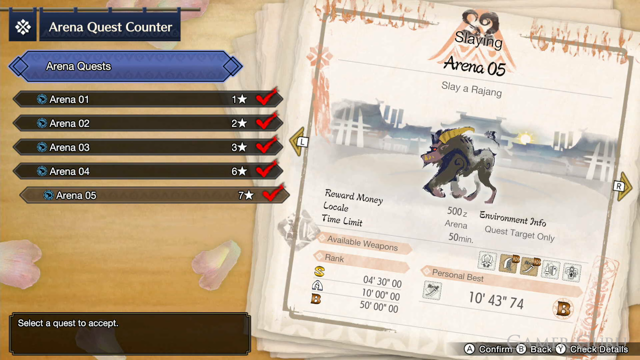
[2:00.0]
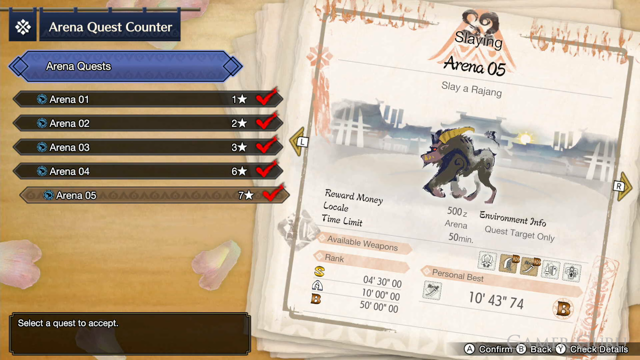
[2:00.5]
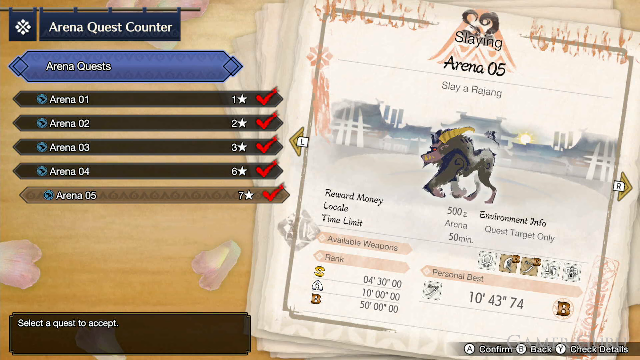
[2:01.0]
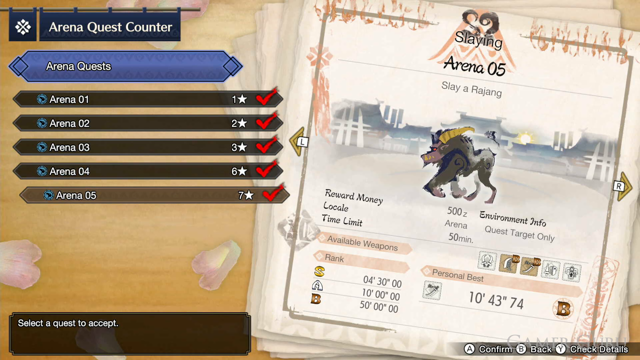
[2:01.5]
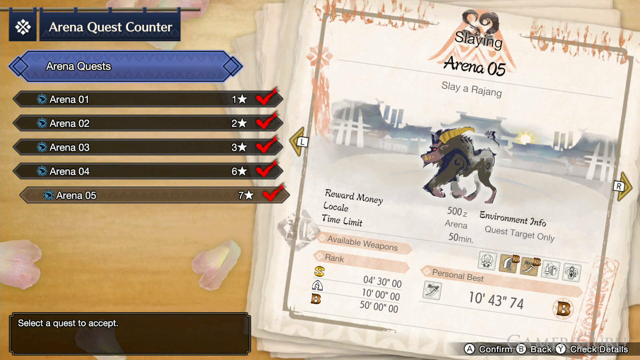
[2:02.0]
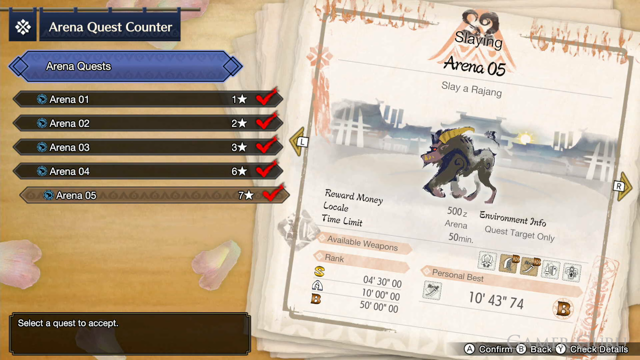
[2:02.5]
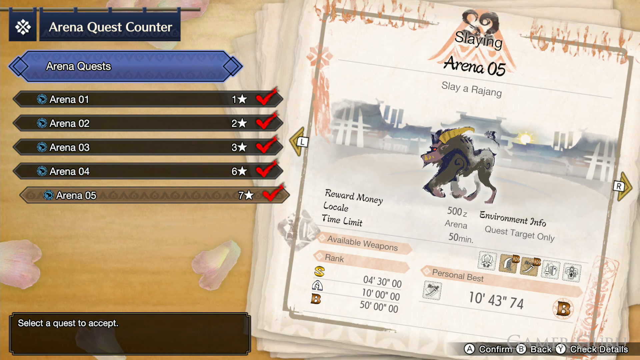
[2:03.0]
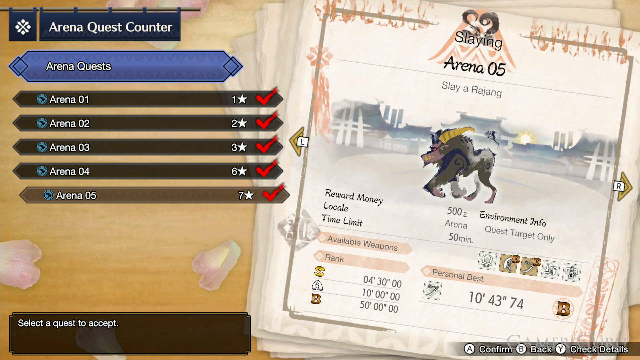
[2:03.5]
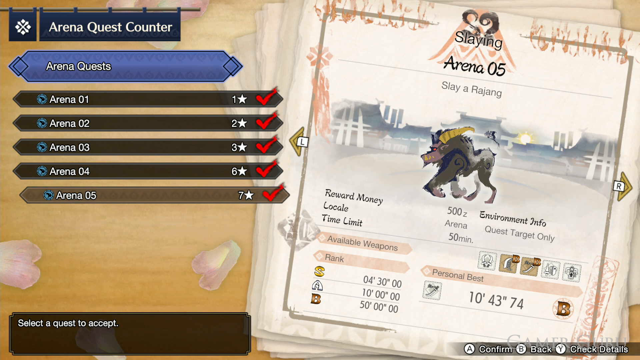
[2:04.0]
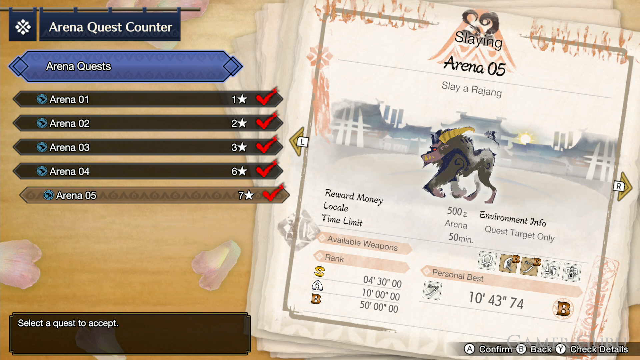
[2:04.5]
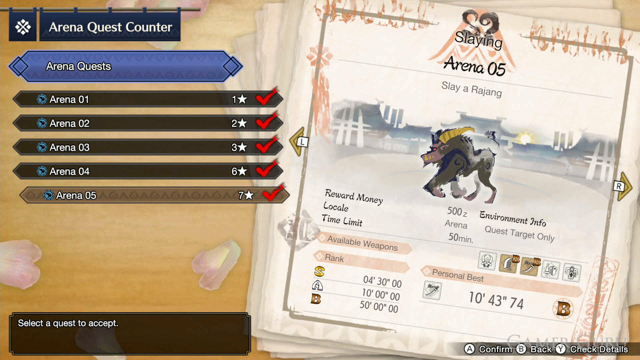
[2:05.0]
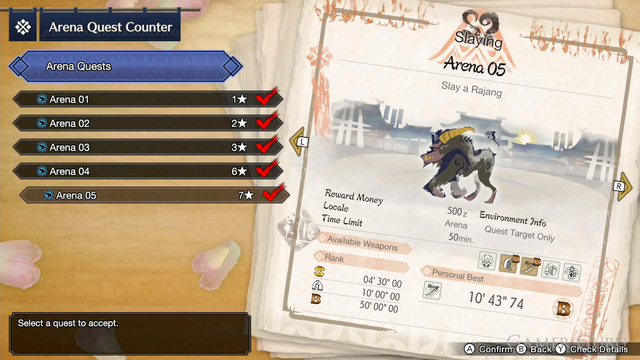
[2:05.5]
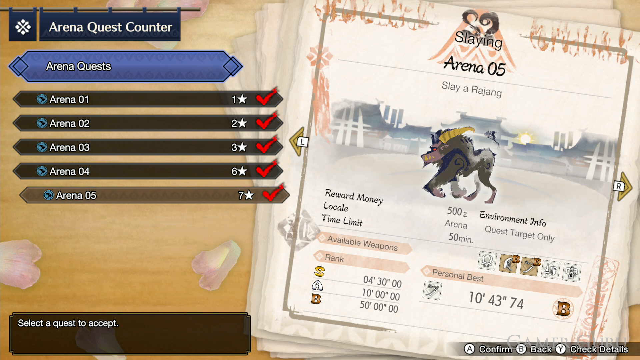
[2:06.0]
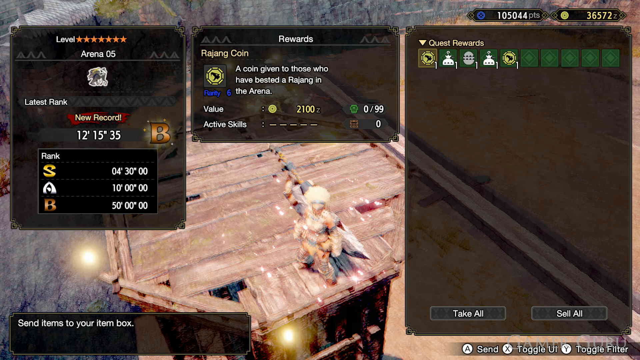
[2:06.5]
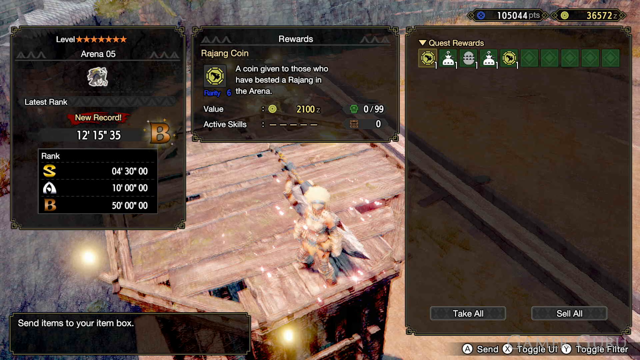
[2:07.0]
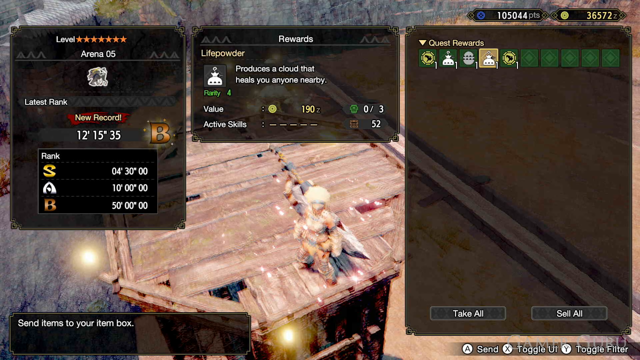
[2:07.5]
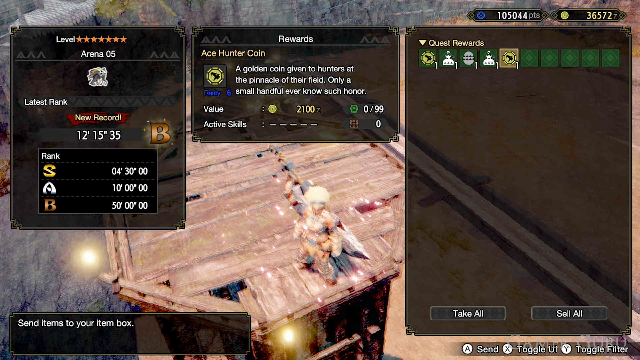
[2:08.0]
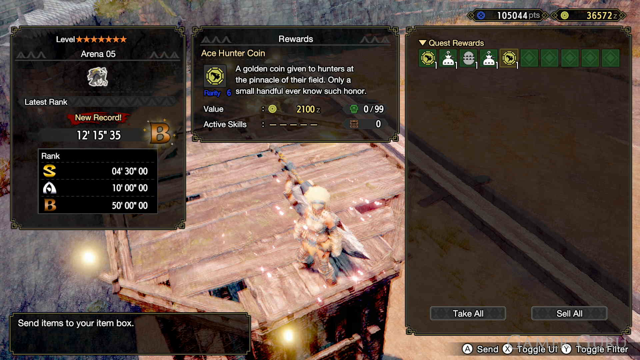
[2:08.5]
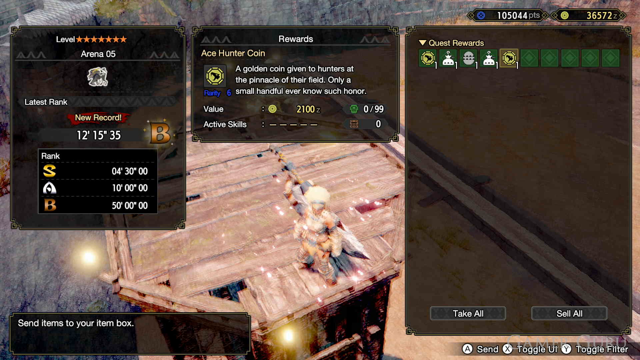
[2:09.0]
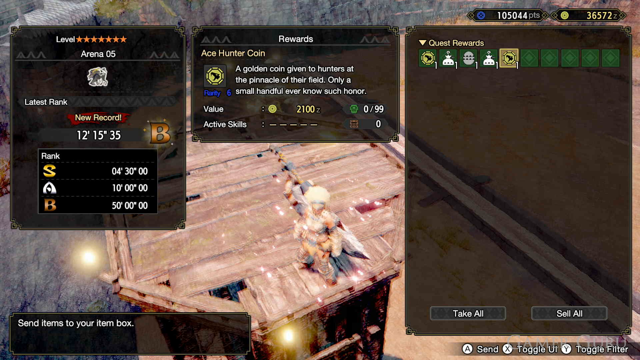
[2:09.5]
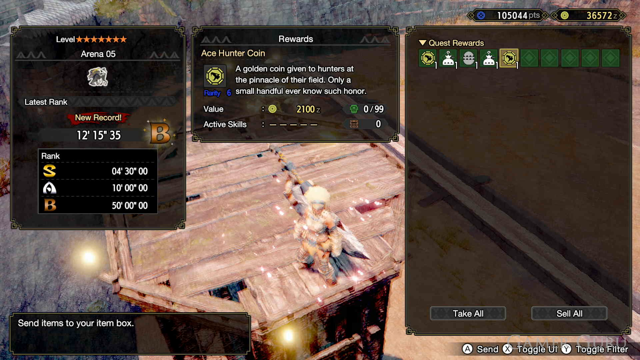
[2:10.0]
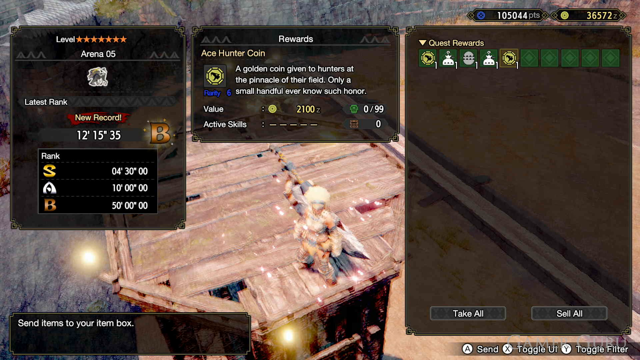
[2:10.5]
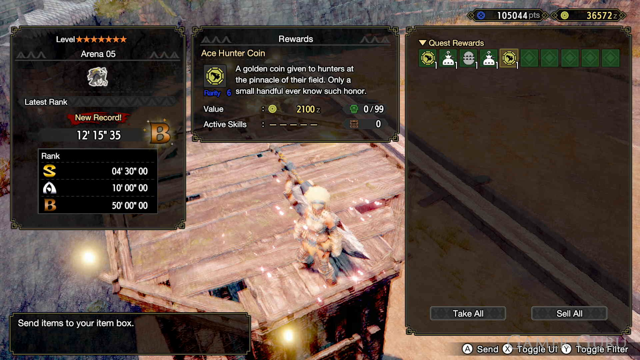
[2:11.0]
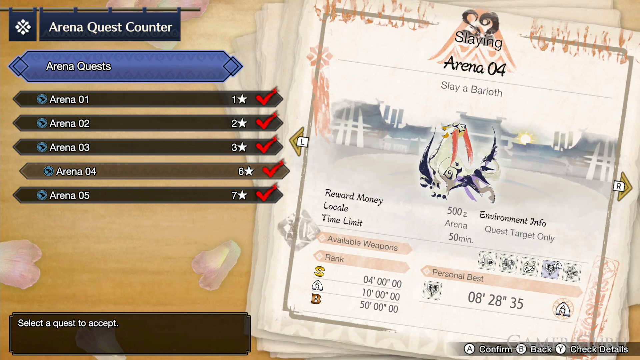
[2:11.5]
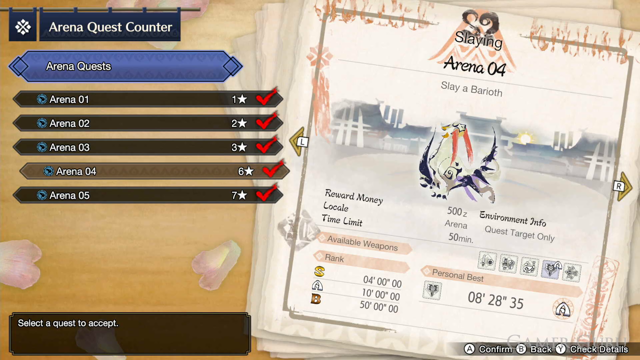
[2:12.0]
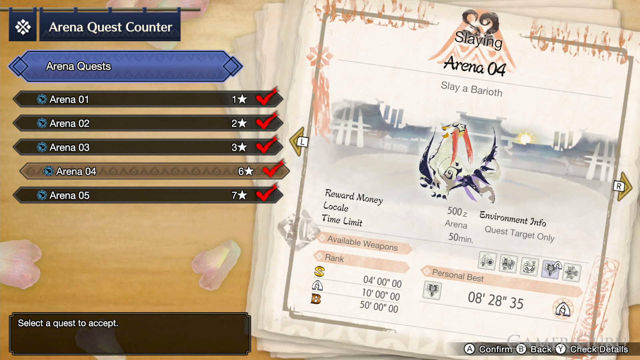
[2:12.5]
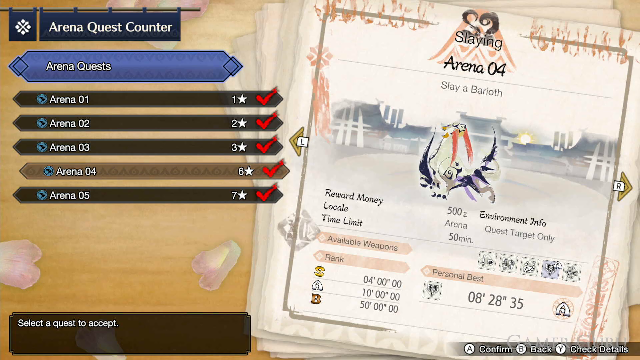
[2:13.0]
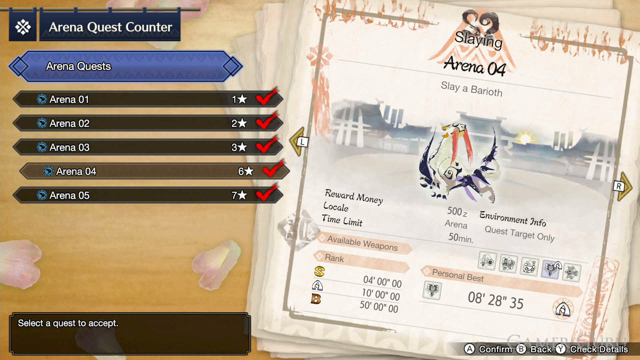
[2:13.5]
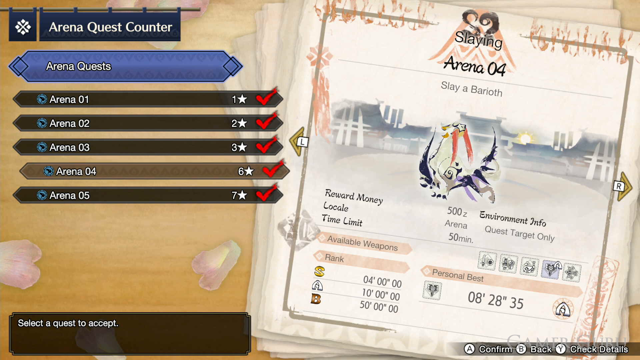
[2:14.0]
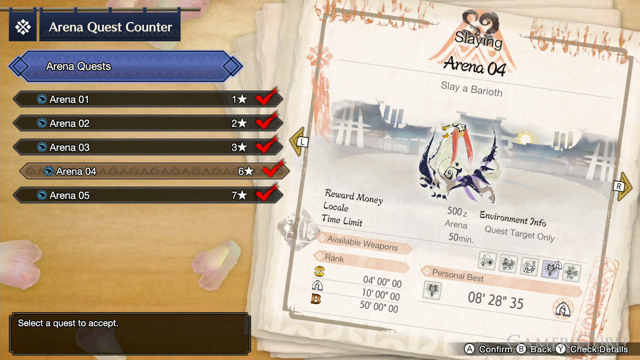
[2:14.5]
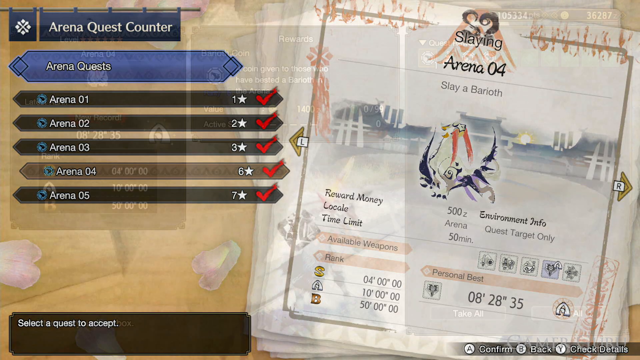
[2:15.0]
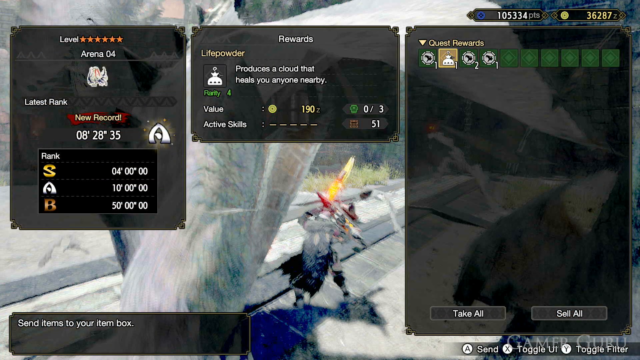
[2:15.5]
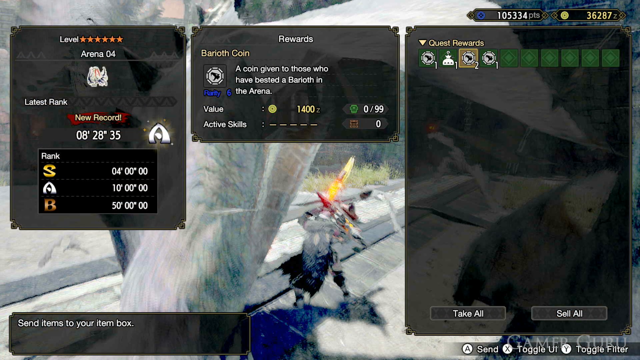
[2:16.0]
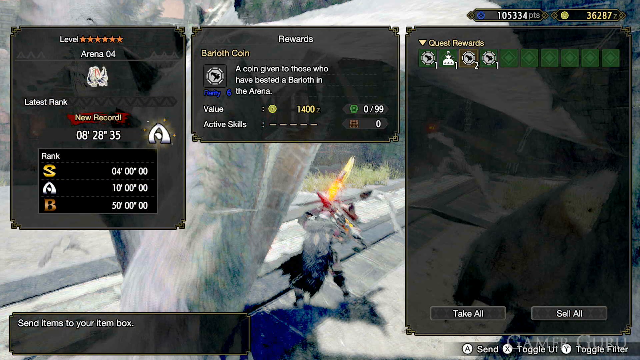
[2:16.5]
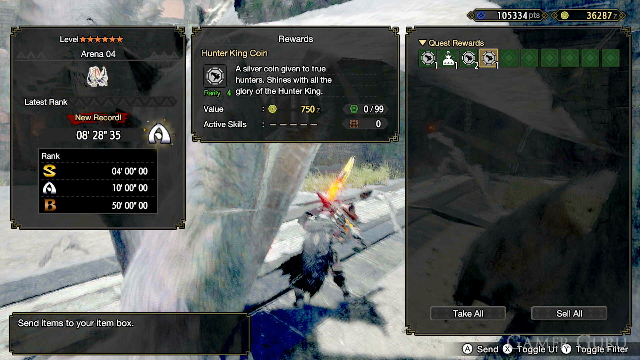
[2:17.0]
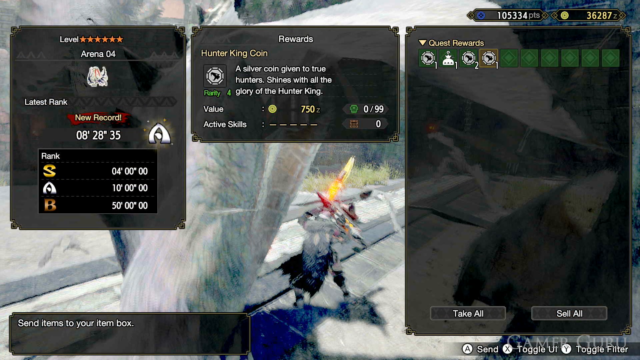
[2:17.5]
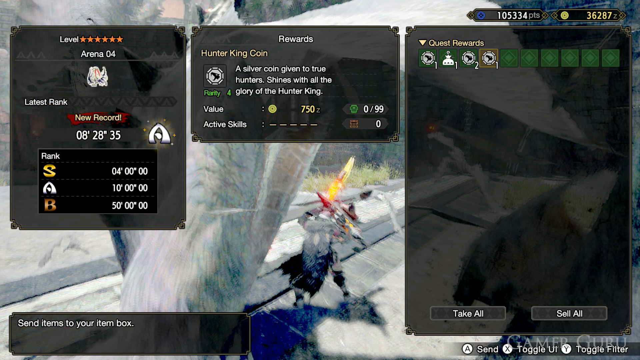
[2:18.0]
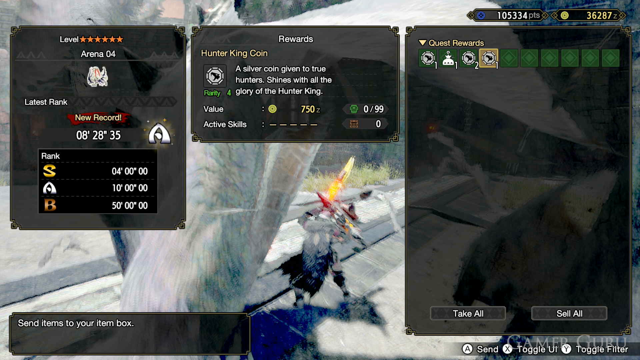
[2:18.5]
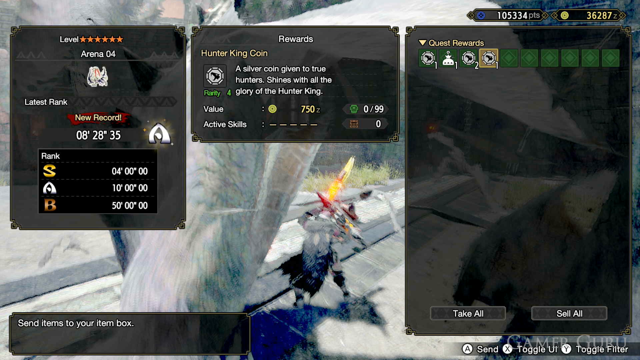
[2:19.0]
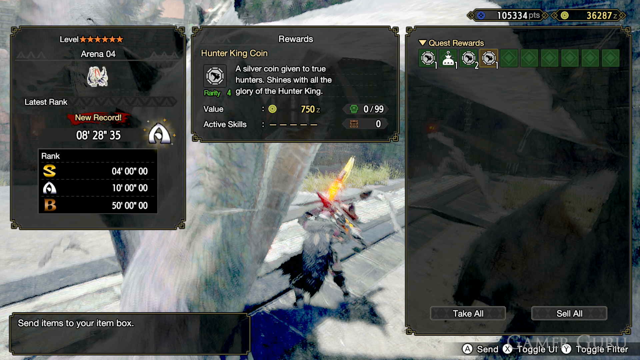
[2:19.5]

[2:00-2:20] What looks like a video game screen reads at the top left level 7 stars, arena 5, latest rank "new record" 12 15 35, rank S 43000, A 100000, B 500000. At the top middle, under "rewards," is a Rajang coin, "a coin given to those who have bested a Rajang in the arena," rarity 6, value 2100 Z, with "active skills" followed by about five dashes. Quest reward icons are to the right. At the very top right, the player has 105,044 points and 36,572 Z, the game currency. What looks like a character from the game has blonde hair, wears a skimpy tribal outfit, and appears to have a sword or some kind of weapon attached to their back.